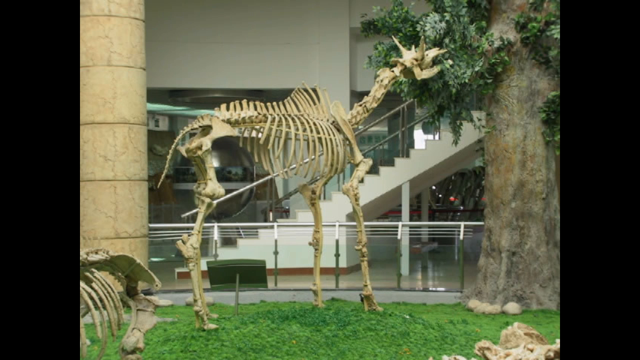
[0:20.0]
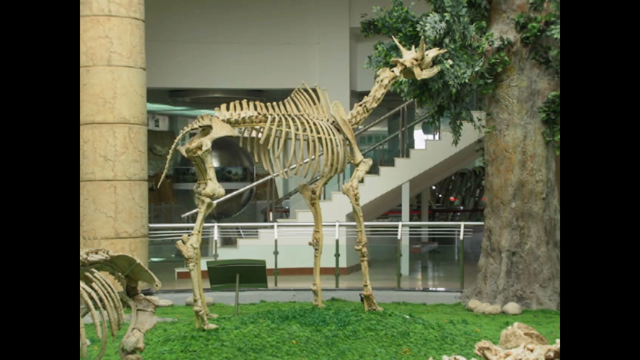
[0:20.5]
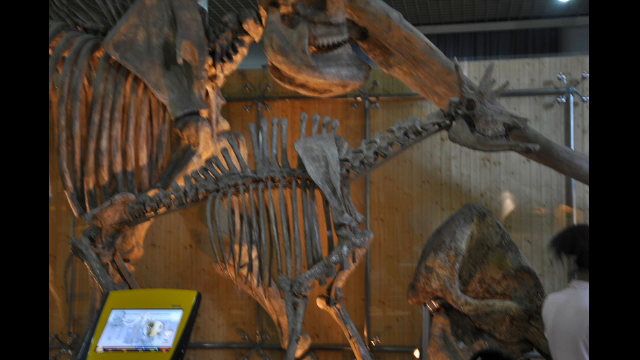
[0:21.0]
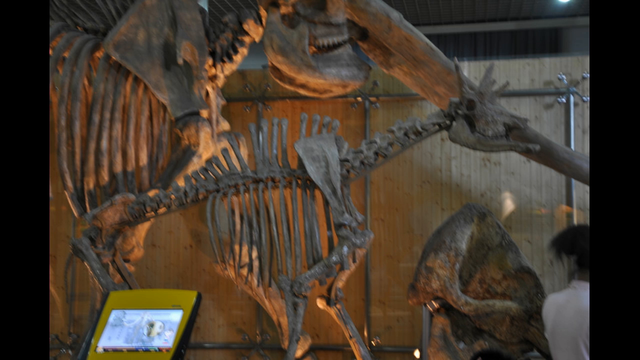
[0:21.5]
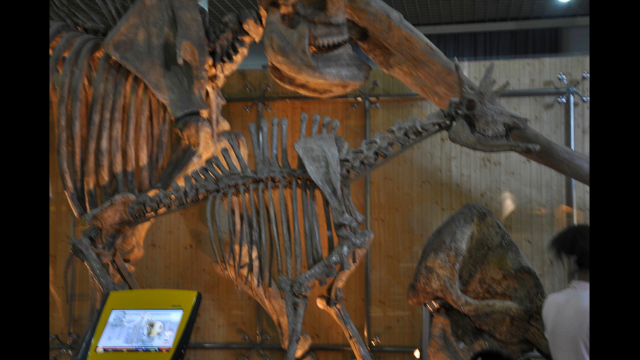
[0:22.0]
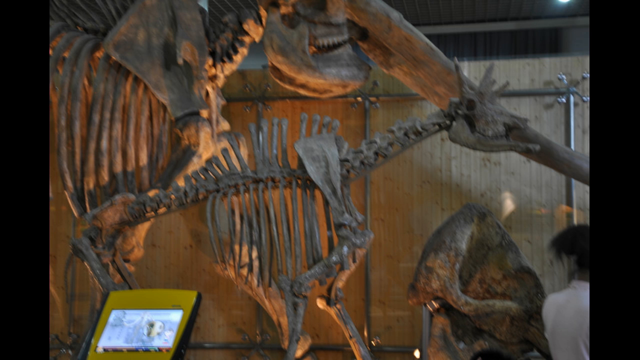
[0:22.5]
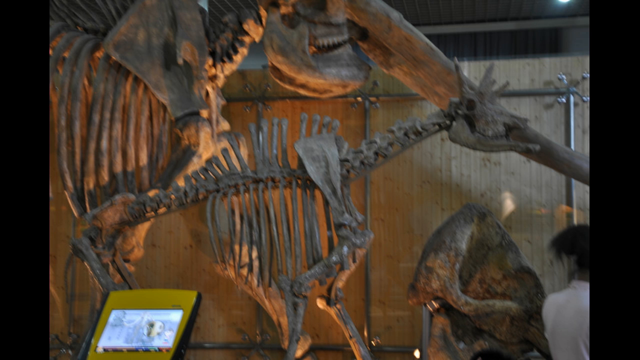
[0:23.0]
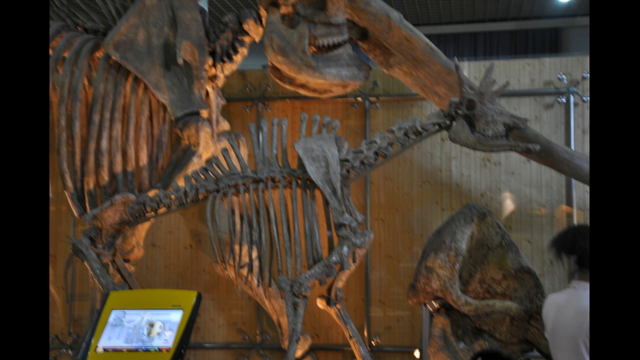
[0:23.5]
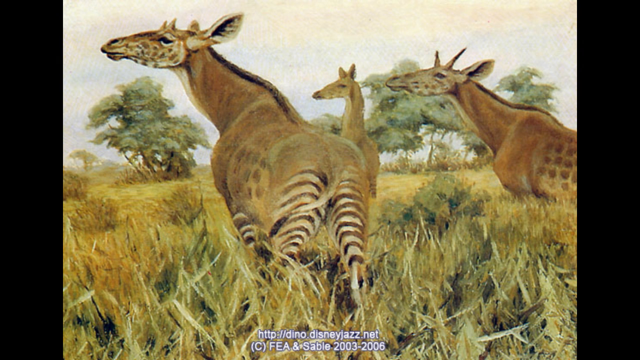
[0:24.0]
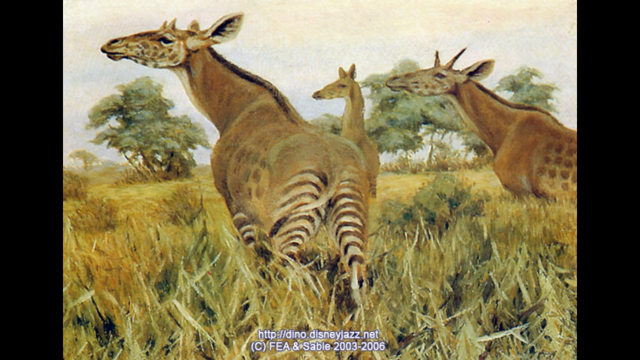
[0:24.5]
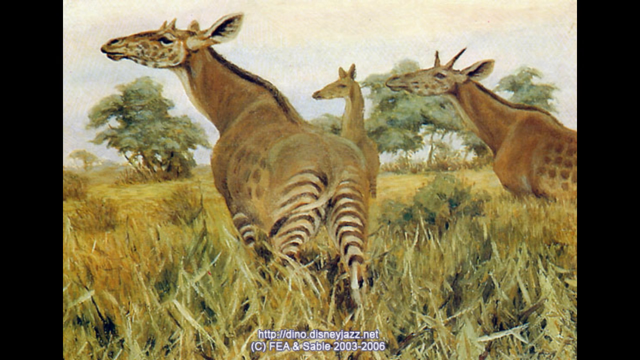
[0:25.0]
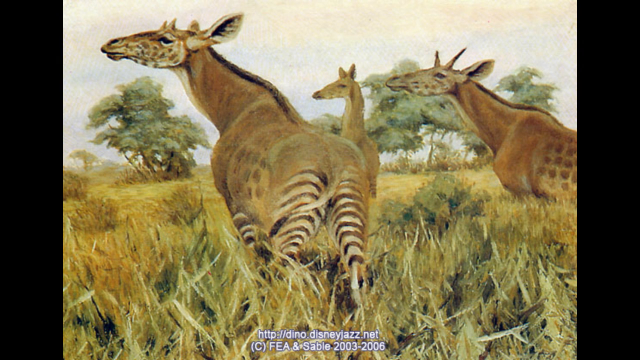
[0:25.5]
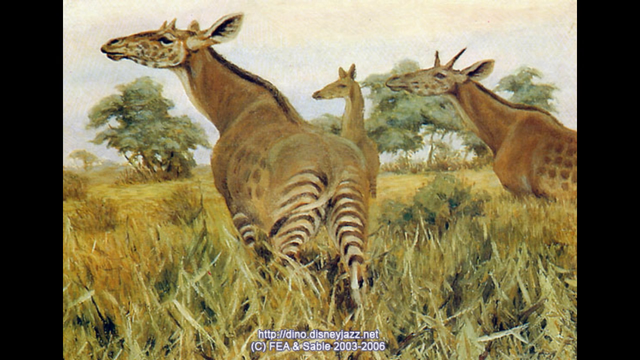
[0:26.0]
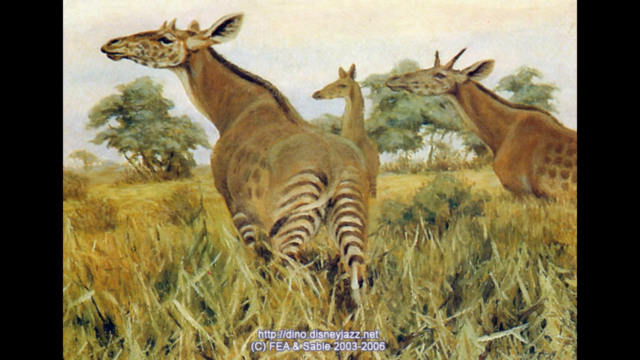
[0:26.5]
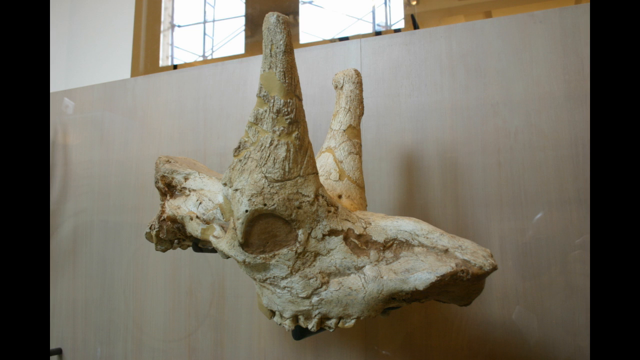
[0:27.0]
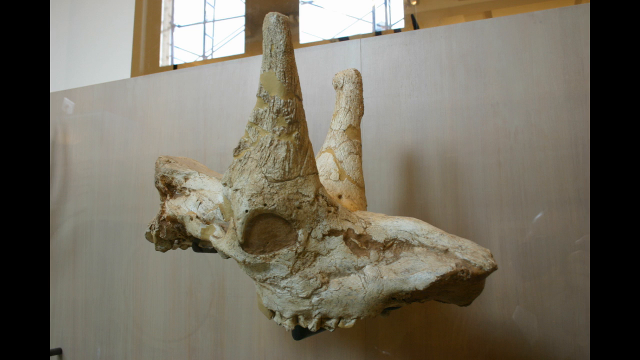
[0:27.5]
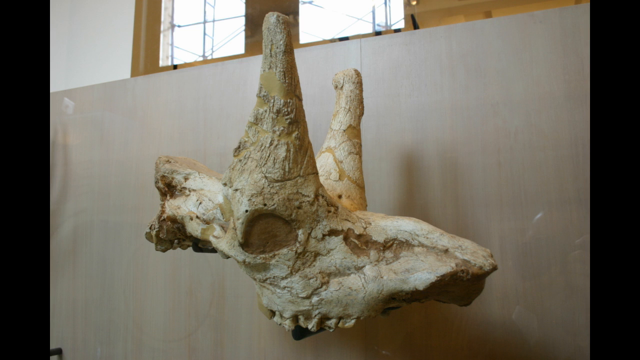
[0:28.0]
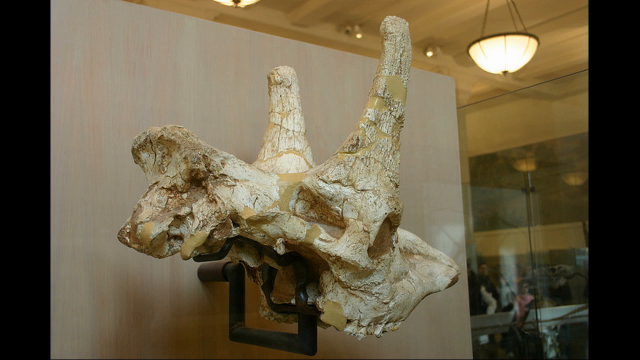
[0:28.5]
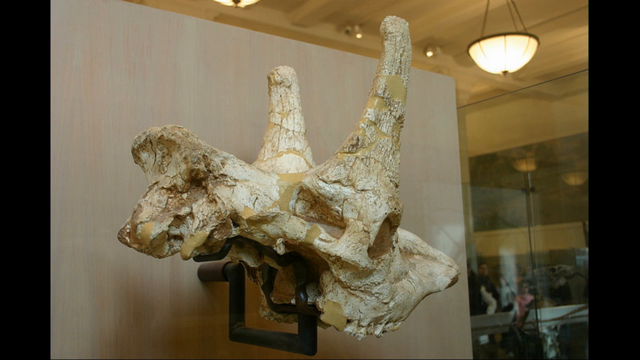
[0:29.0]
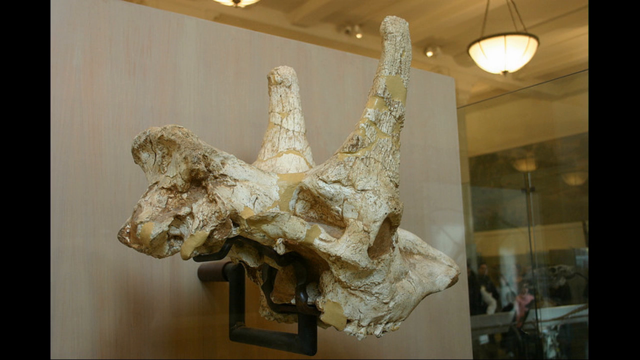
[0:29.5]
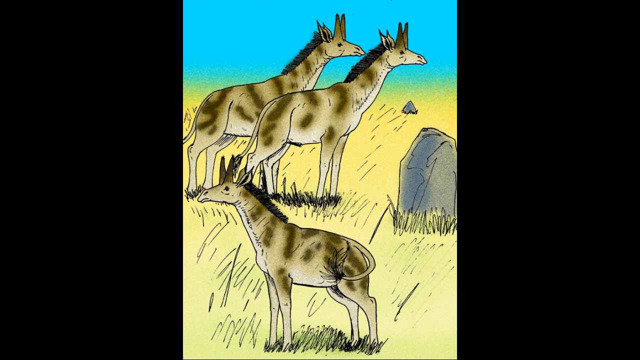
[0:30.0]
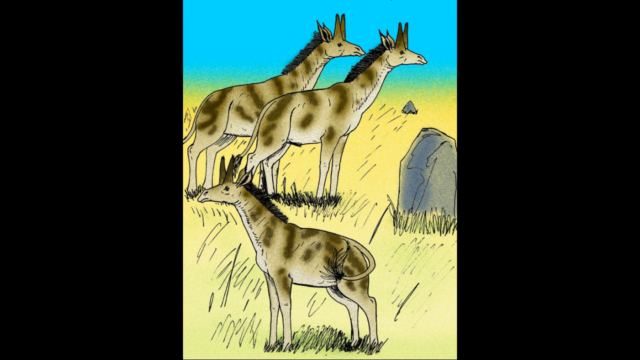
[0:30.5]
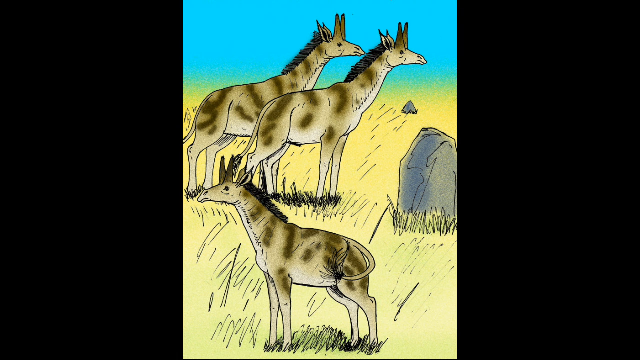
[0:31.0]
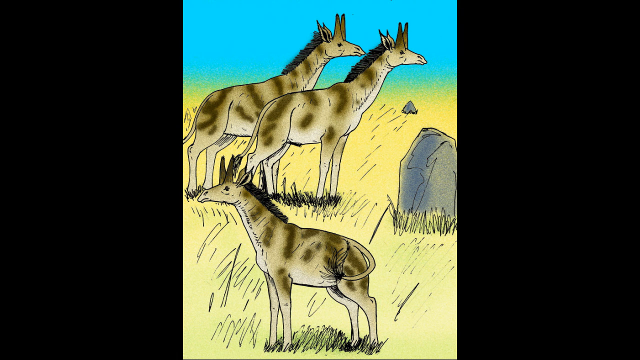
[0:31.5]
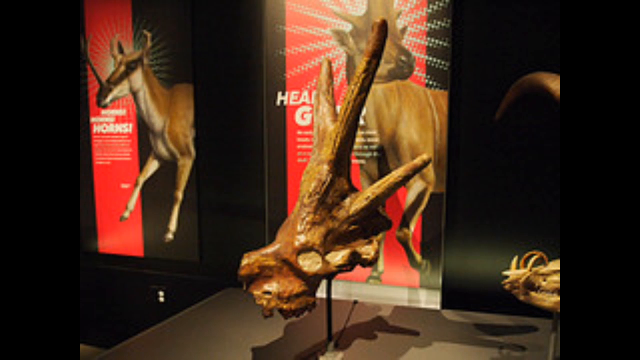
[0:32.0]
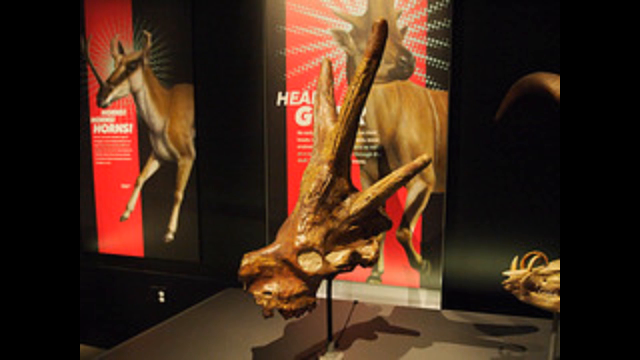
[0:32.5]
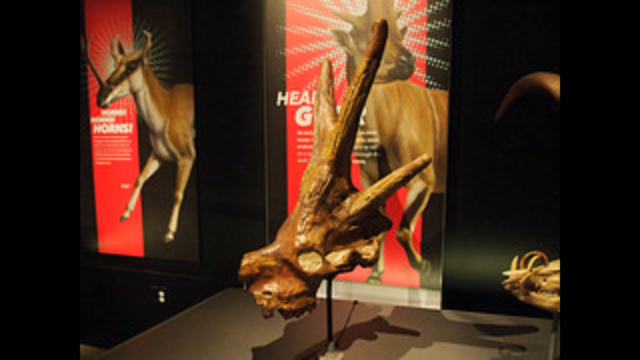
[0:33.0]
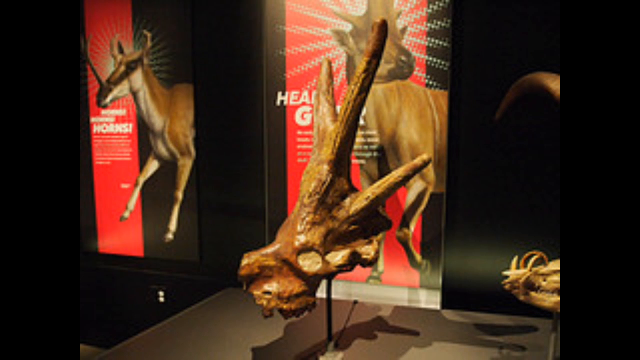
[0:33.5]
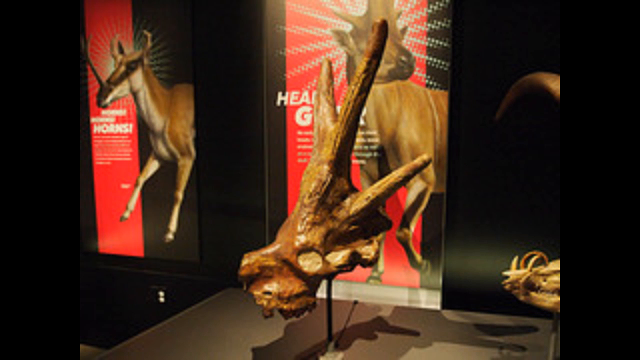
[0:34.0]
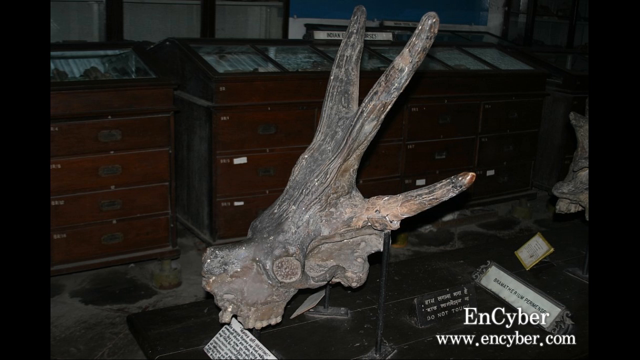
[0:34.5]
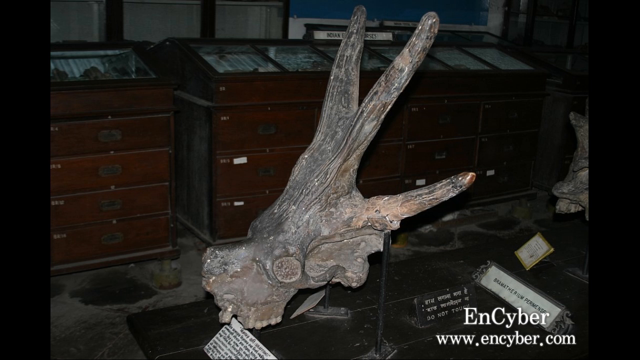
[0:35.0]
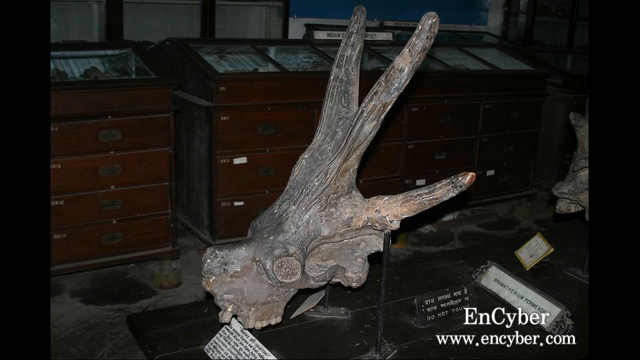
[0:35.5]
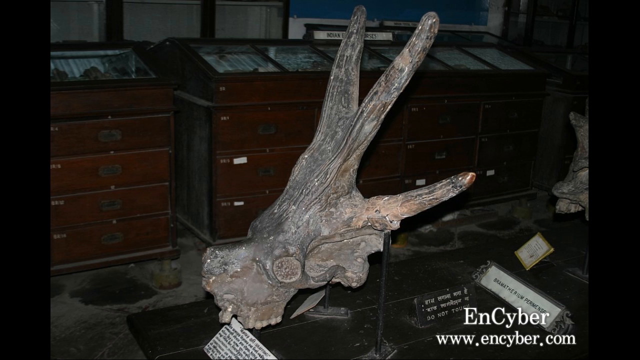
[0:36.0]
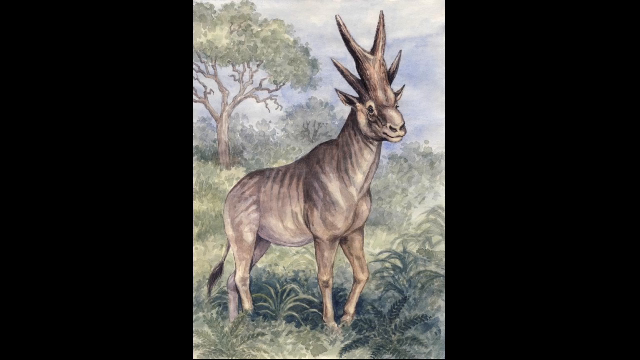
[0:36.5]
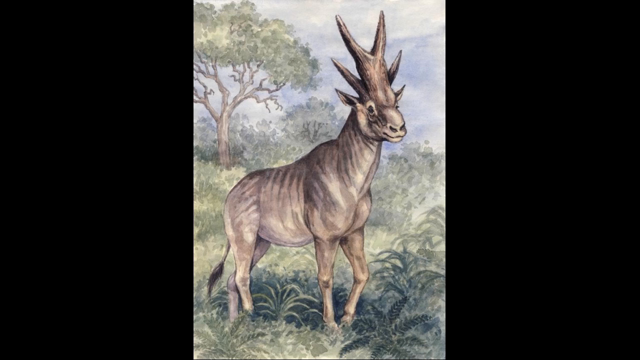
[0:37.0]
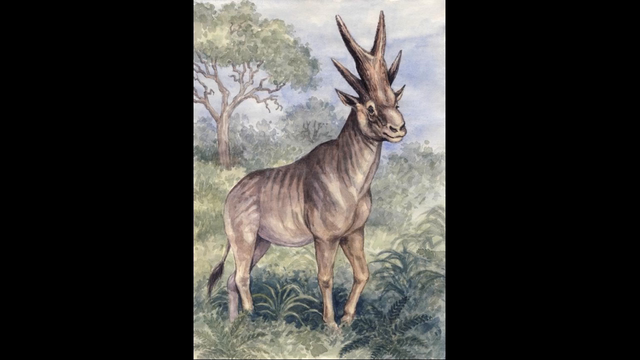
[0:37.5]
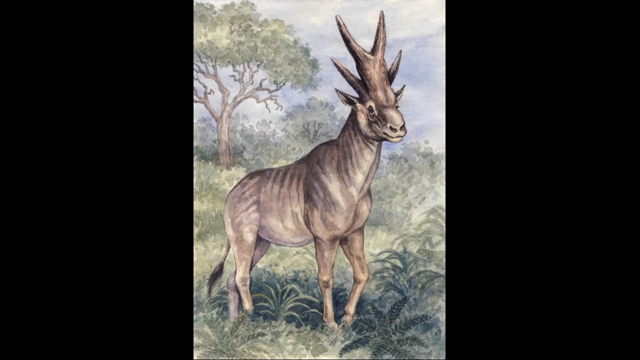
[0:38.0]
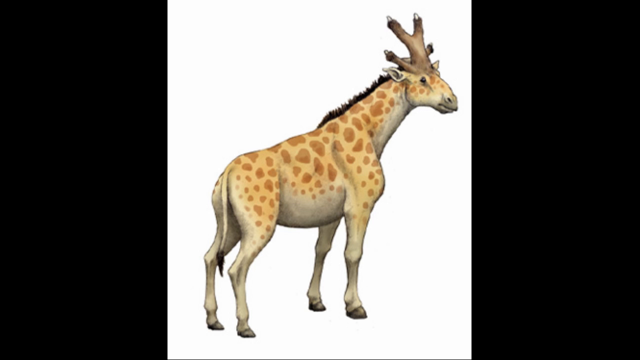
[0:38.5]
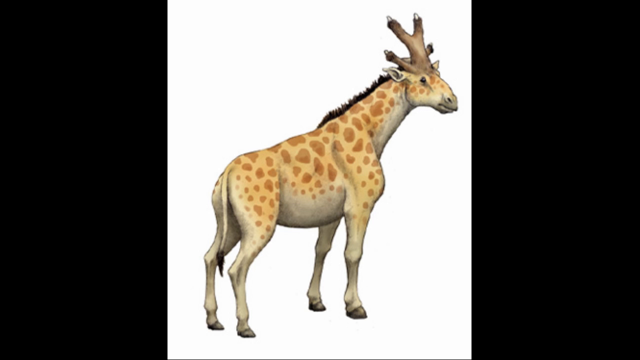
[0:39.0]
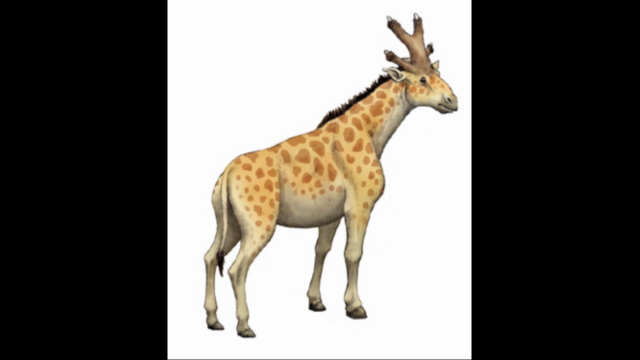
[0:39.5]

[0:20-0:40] The skeleton appears to be set up as if eating leaves from a tree. More bones are shown inside a museum, with a touchscreen, like an info touchscreen pad, in the bottom left. An artist's rendition of an ancient animal follows; it is tan and looks somewhat like a zebra. Next is a skull of one of these ancient animals with two large horns, shown first from the front and then from the back, apparently also inside a museum. Another, fairly cartoony artist's rendition shows three of these ancient animals in a grassy field: two in the background facing right and one in the foreground facing left. More museum artifacts of skulls follow, then another artist's rendition of one of these ancient animals, which look like a mixture of a giraffe and a zebra, with large horns on their heads.